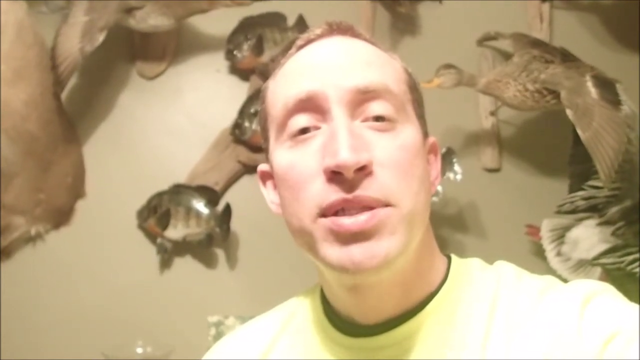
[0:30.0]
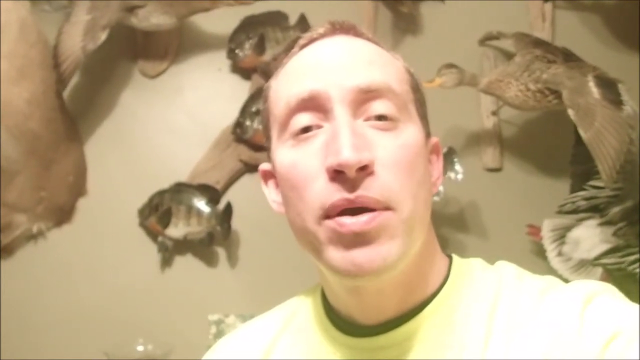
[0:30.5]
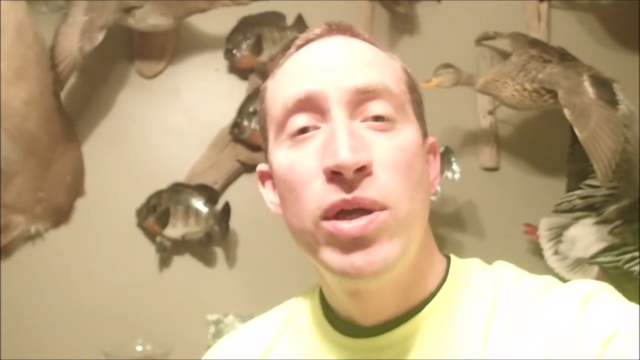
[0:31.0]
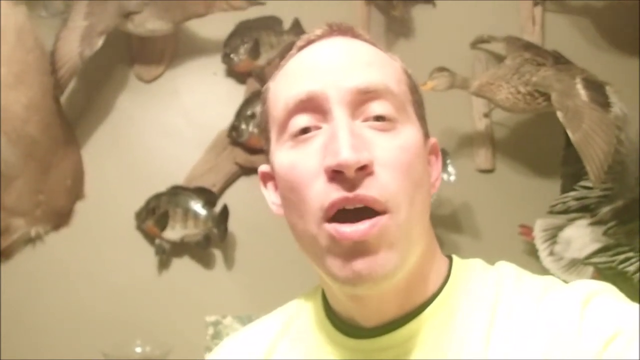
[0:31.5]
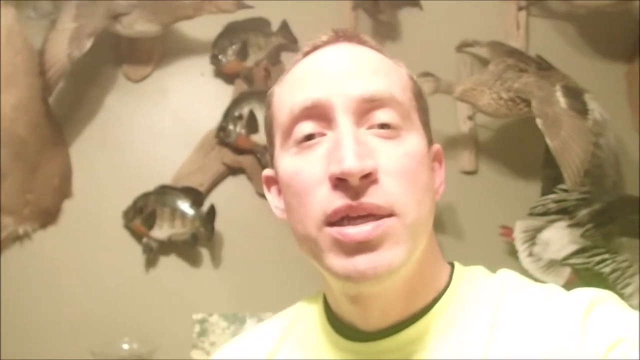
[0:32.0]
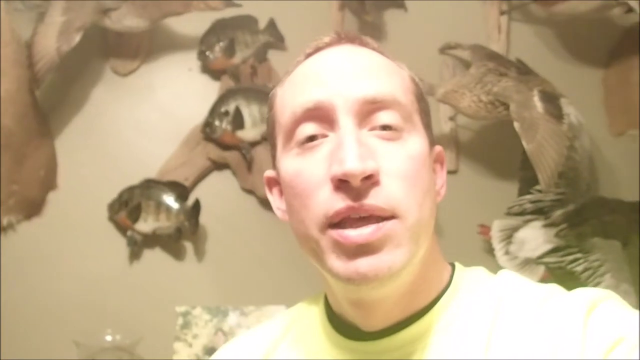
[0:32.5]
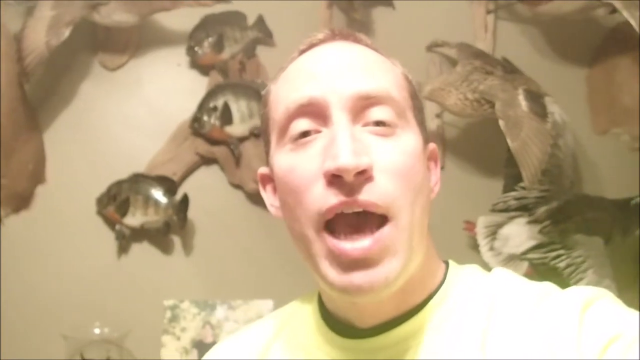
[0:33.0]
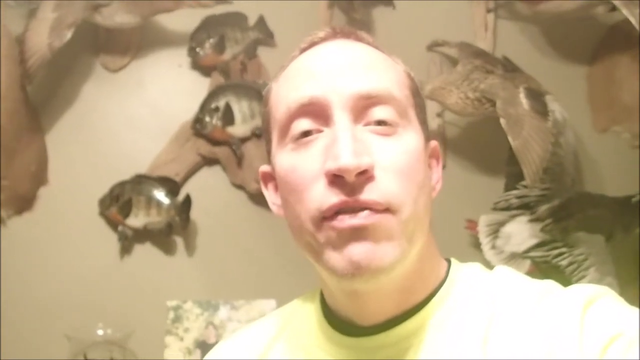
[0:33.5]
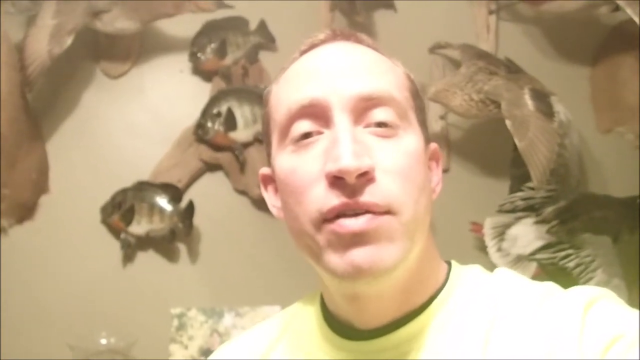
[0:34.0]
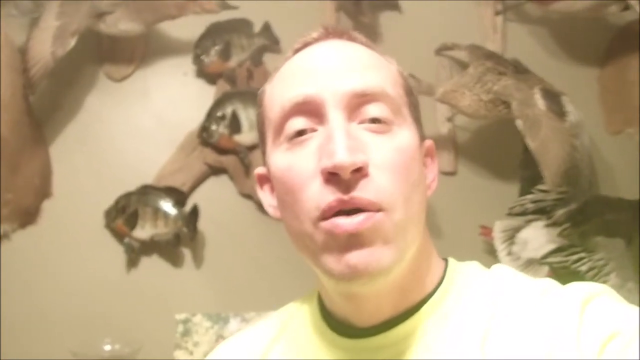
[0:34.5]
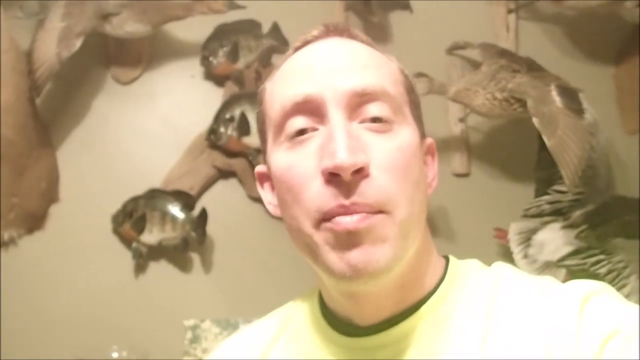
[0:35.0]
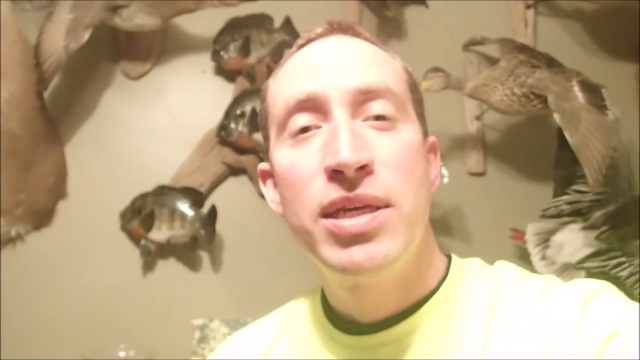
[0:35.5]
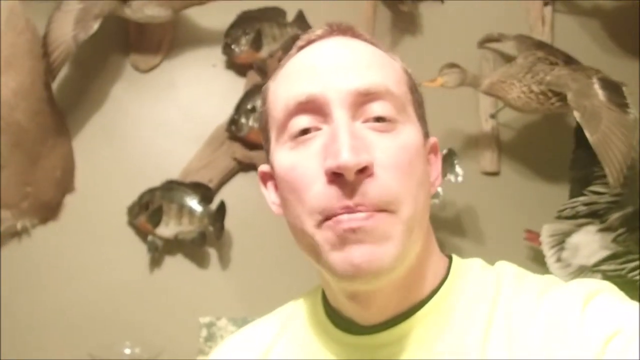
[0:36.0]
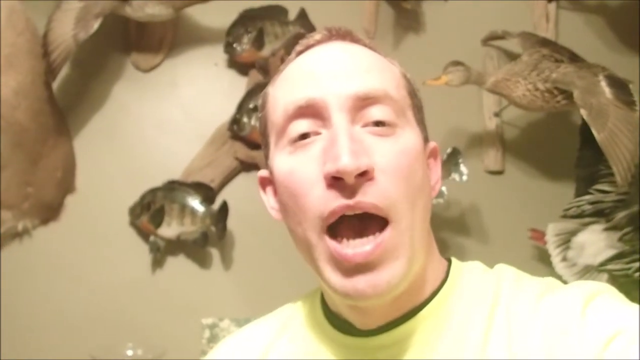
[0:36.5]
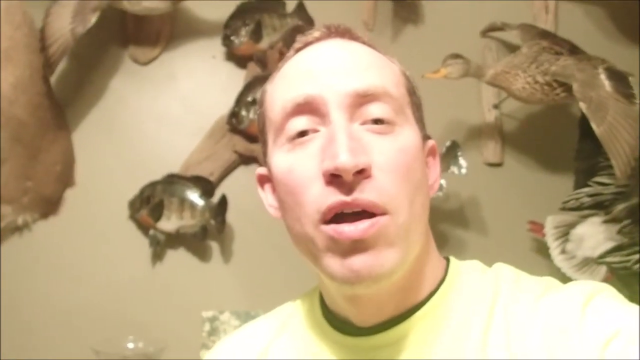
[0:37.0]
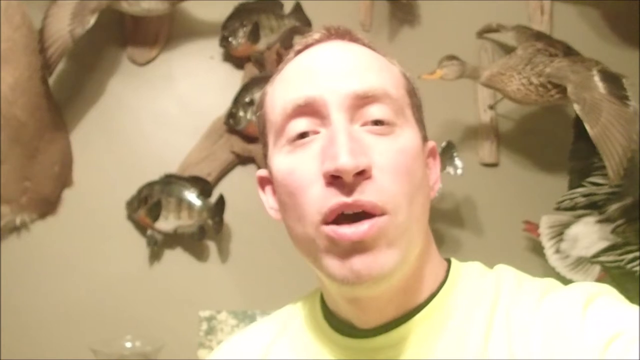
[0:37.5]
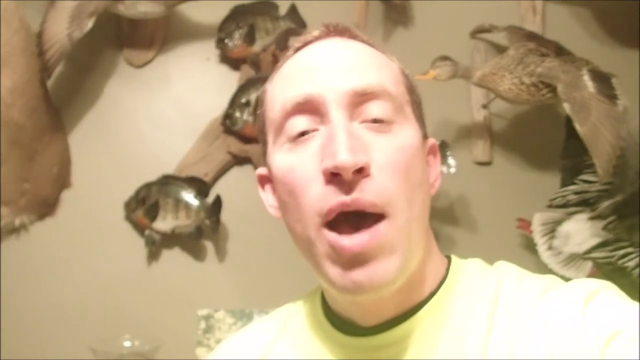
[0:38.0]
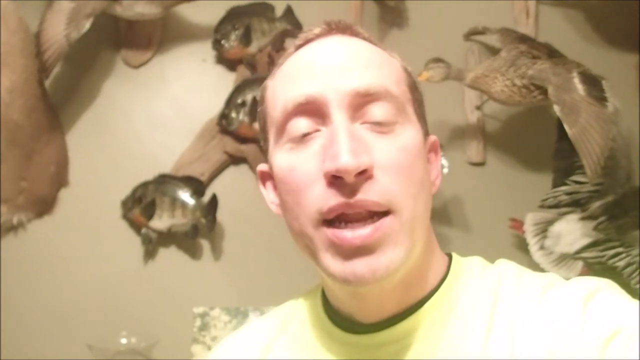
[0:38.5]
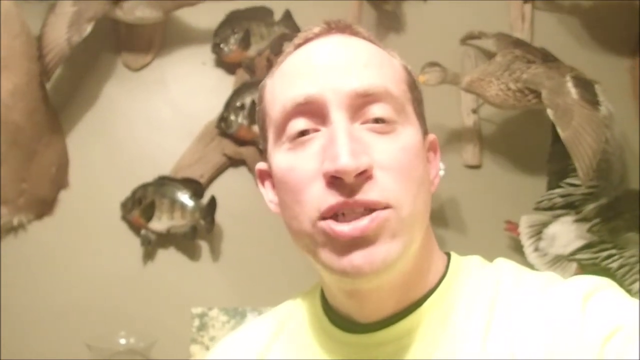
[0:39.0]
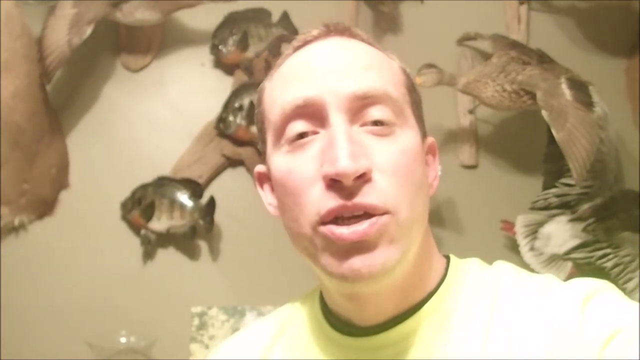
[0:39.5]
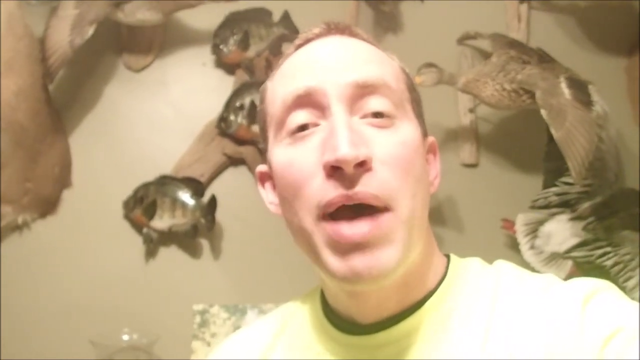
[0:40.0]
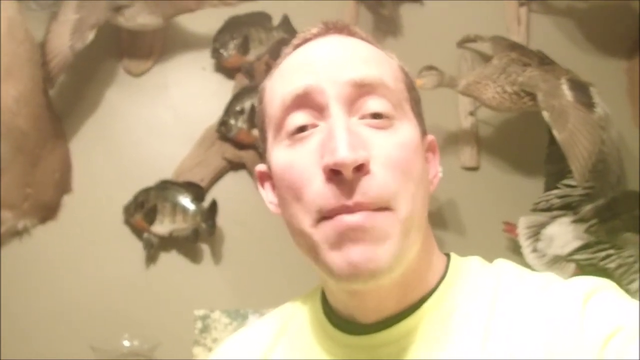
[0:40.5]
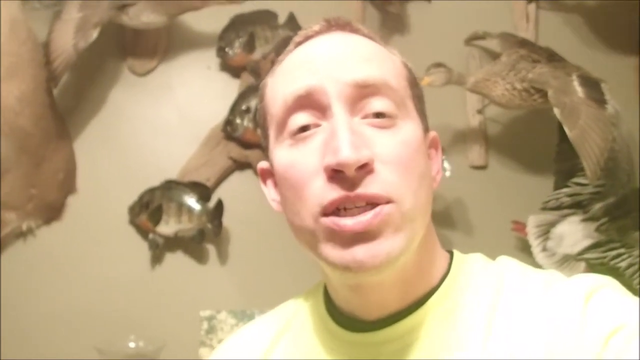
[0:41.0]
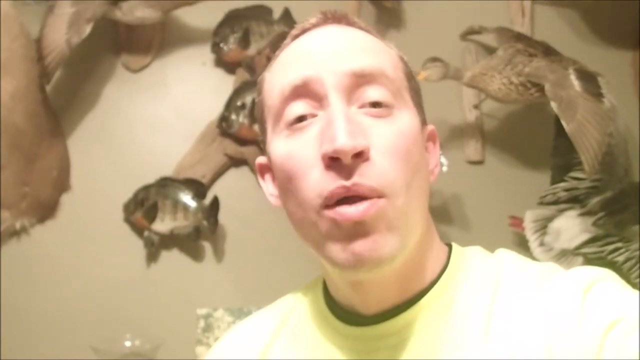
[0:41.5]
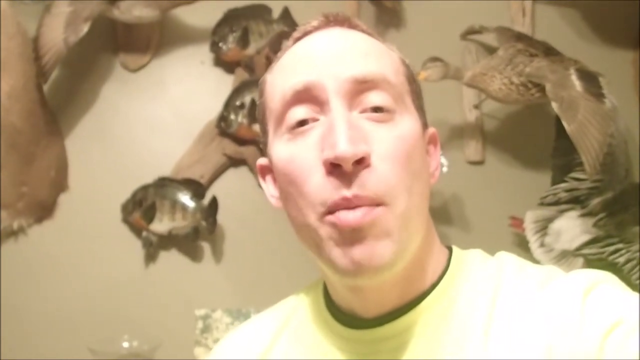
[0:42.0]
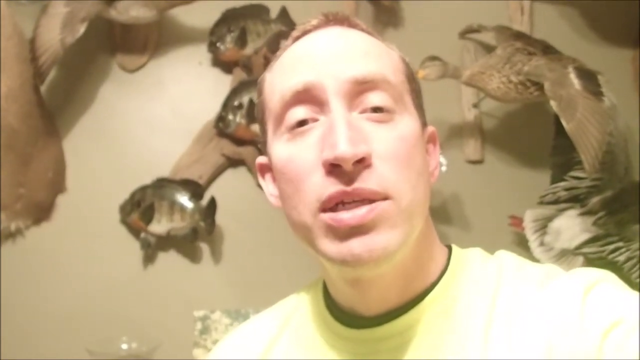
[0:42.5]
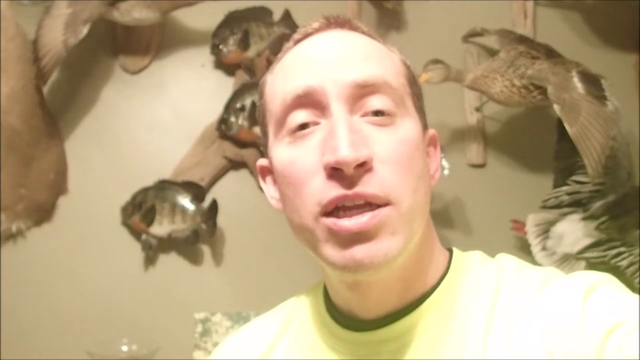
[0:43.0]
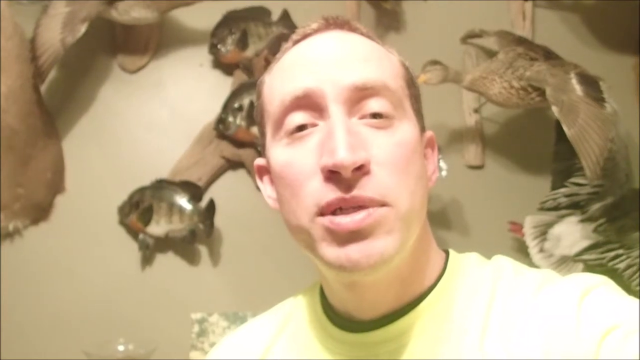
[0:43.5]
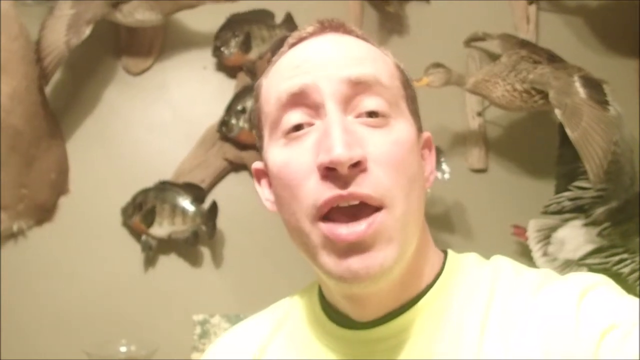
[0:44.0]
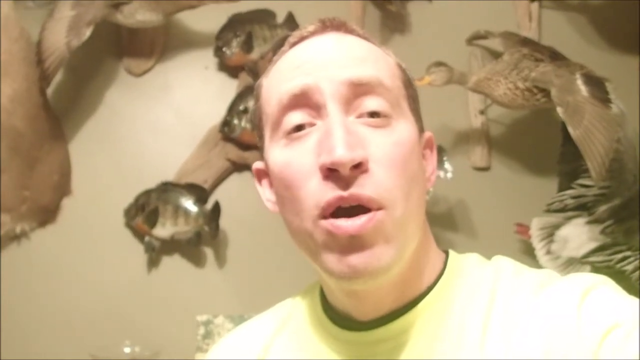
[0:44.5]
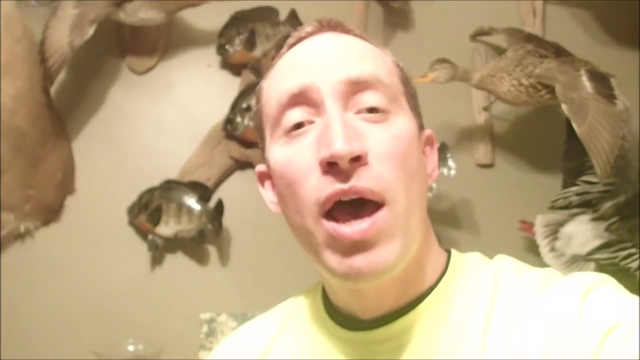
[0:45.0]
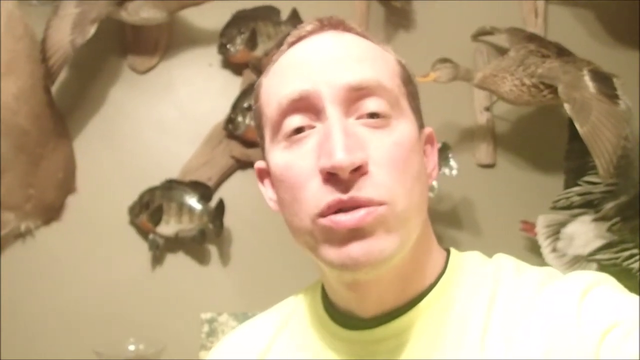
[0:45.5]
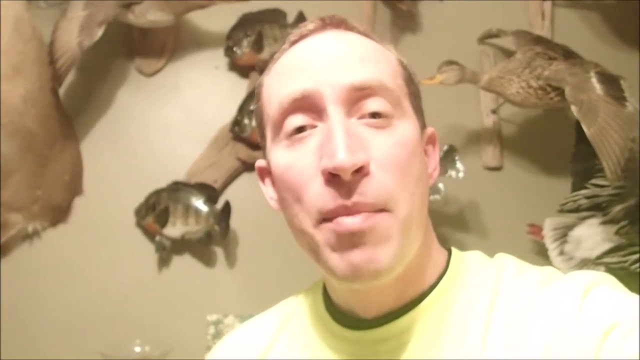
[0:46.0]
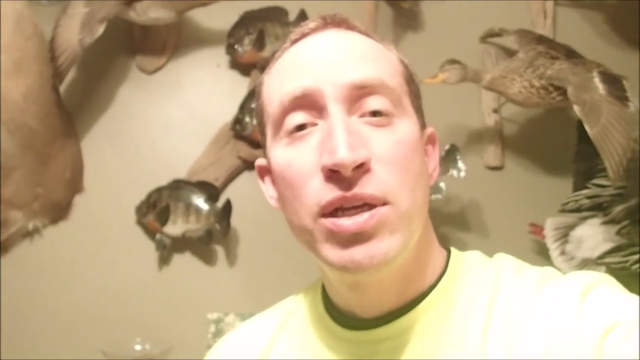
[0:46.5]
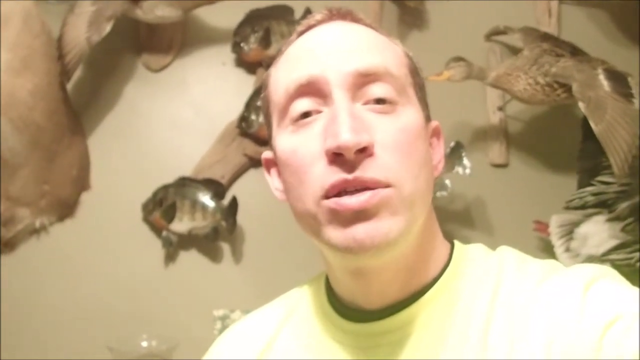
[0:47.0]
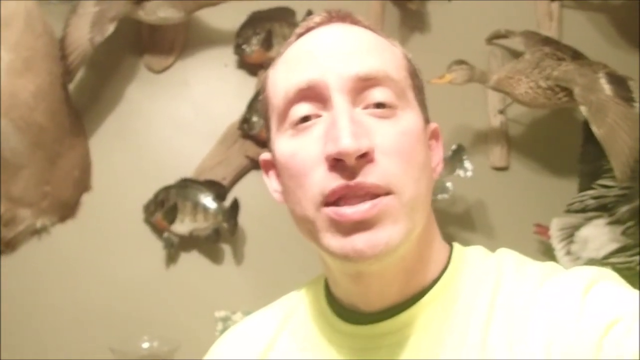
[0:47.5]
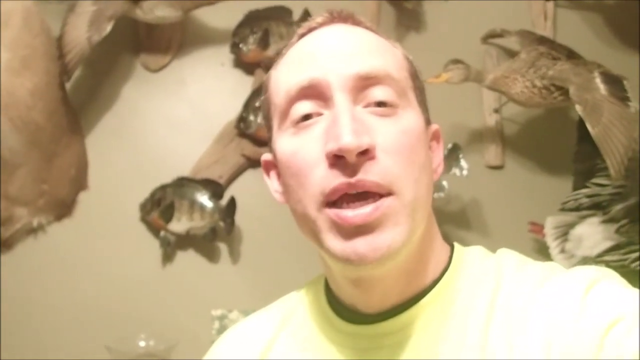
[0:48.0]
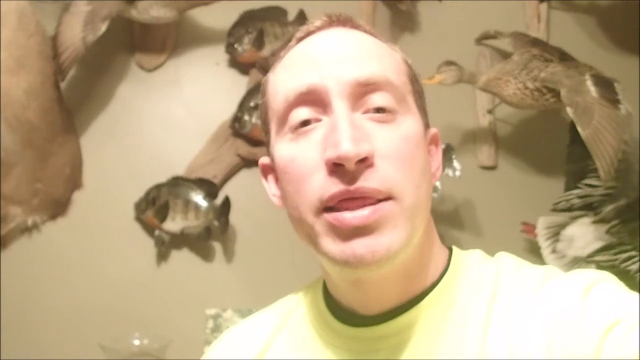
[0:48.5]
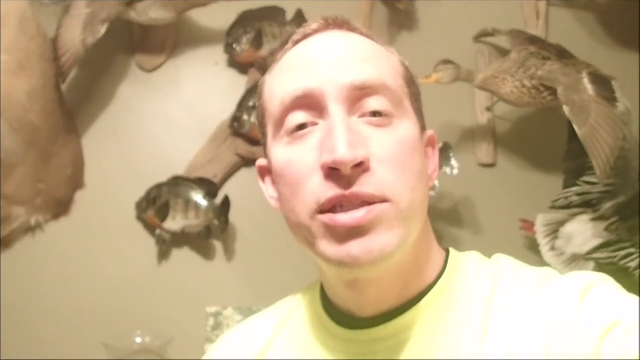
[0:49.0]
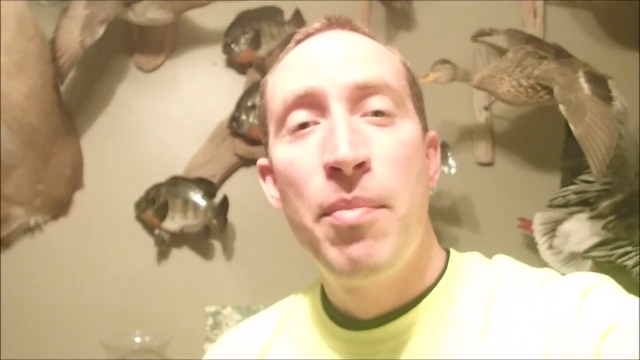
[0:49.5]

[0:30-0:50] A person faces the camera in an upright position and appears to be demonstrating or saying something about what is in the background. Animals are displayed on the wall behind, which seems to be a neutral, natural colour; there are reptiles, fish and birds, displayed with statues. He does not move around. At times only his face is shown, and the camera zooms in on the wall, on a bird, on a fish and on different kinds of animals, reptiles and birds. The lighting falls on his face, showing it clearly.